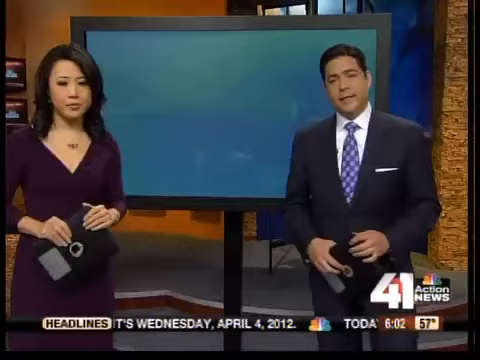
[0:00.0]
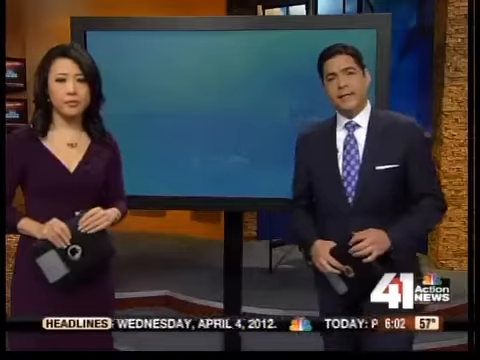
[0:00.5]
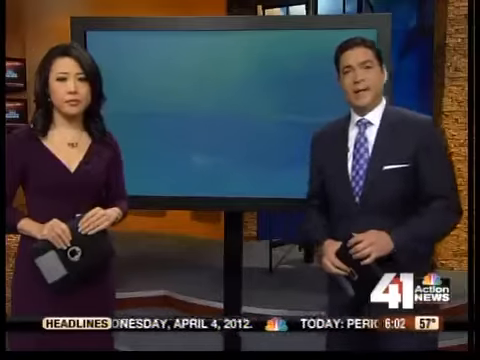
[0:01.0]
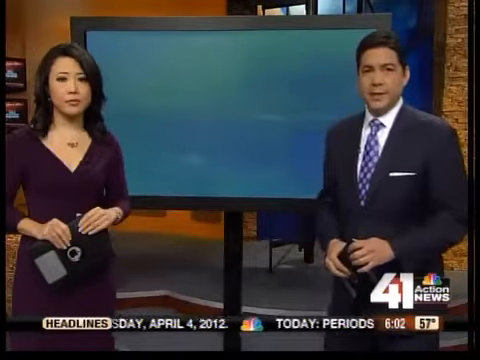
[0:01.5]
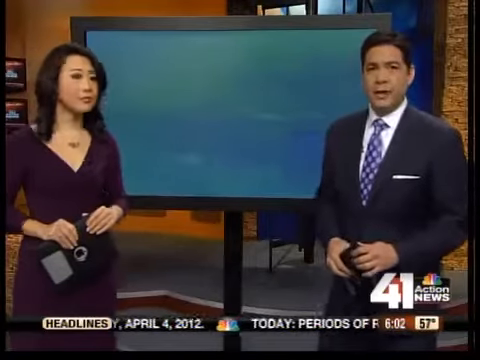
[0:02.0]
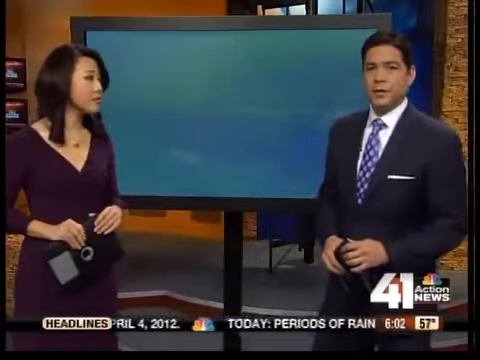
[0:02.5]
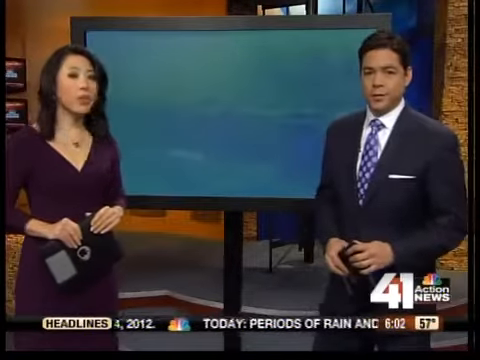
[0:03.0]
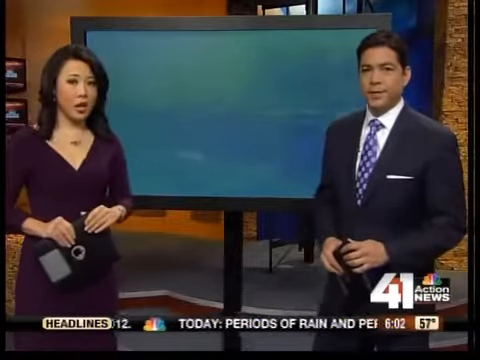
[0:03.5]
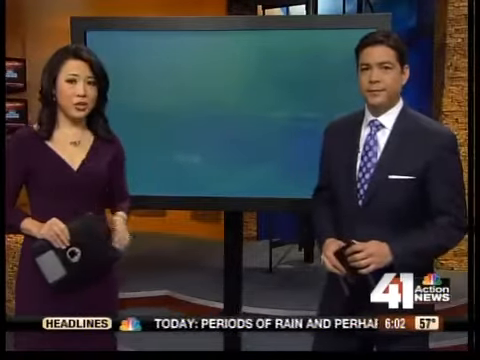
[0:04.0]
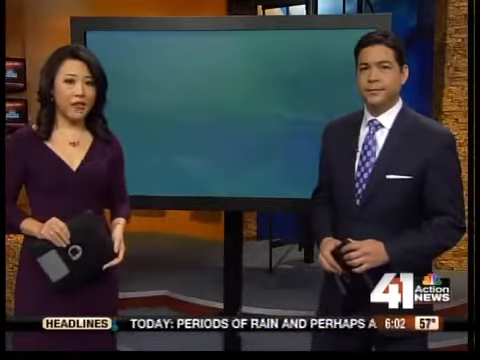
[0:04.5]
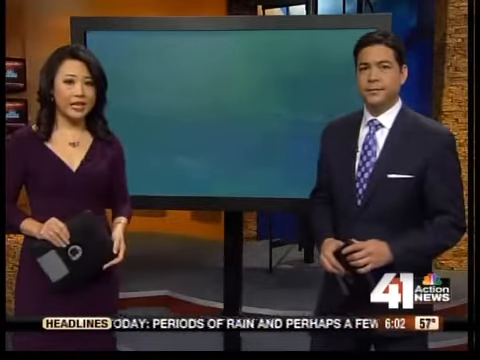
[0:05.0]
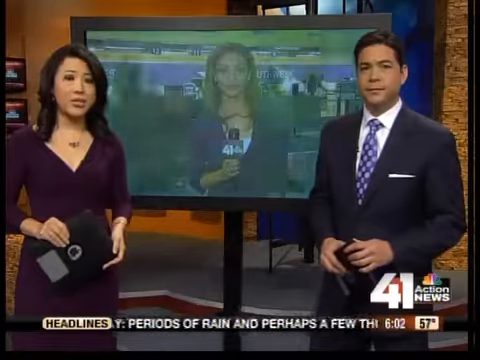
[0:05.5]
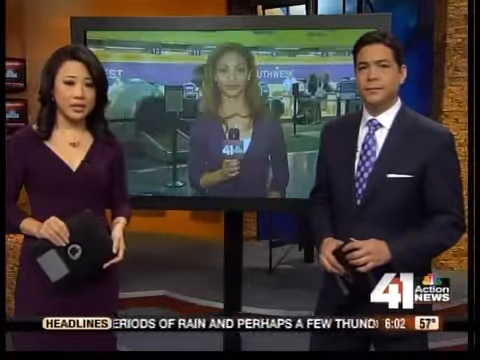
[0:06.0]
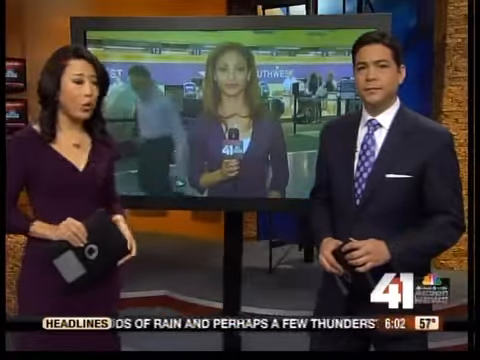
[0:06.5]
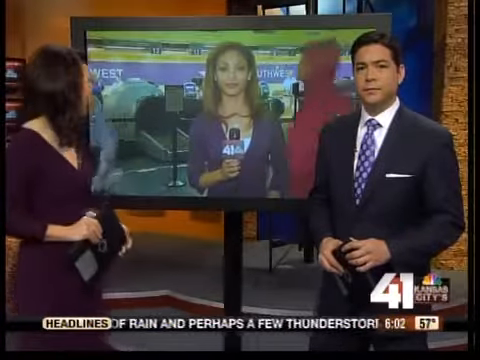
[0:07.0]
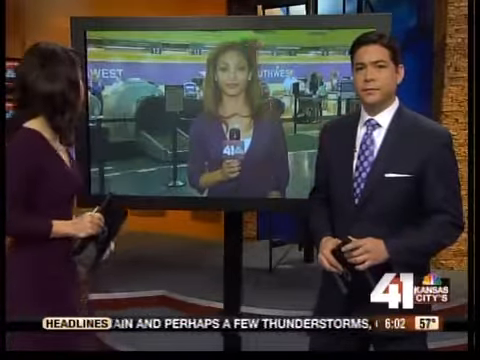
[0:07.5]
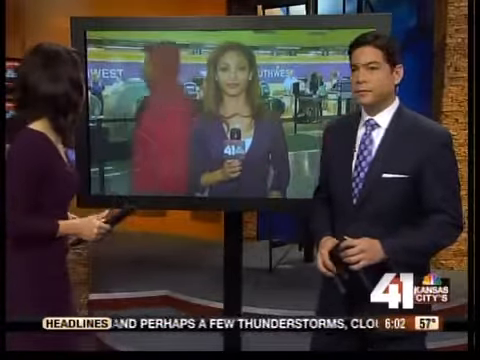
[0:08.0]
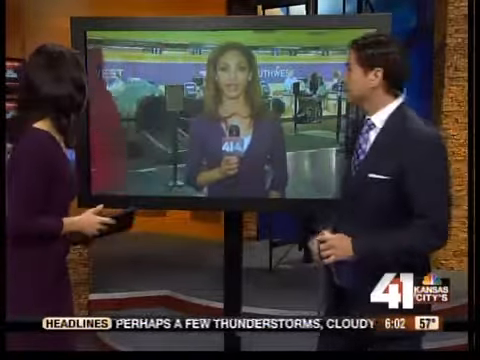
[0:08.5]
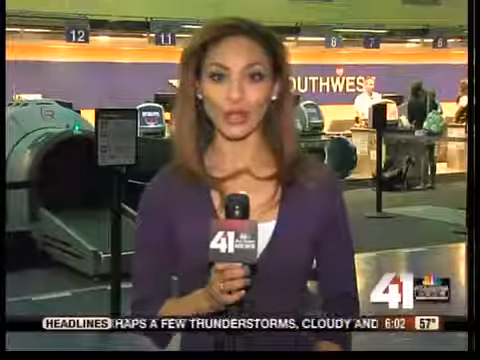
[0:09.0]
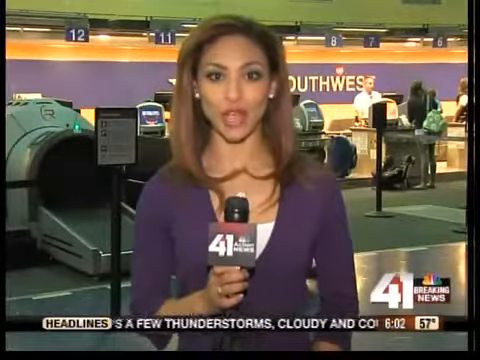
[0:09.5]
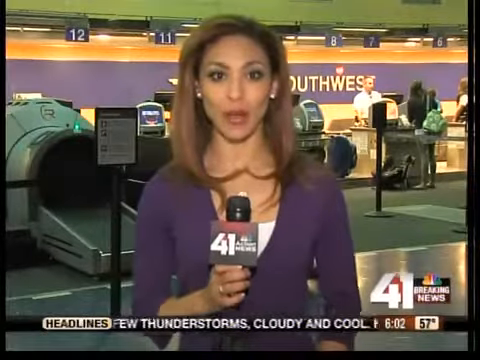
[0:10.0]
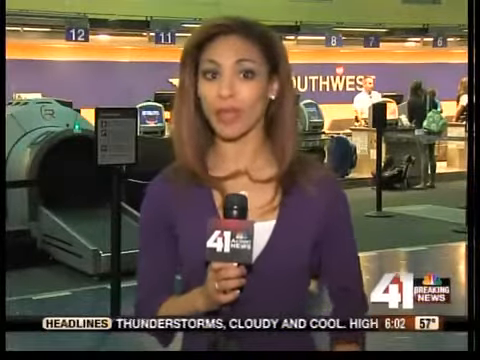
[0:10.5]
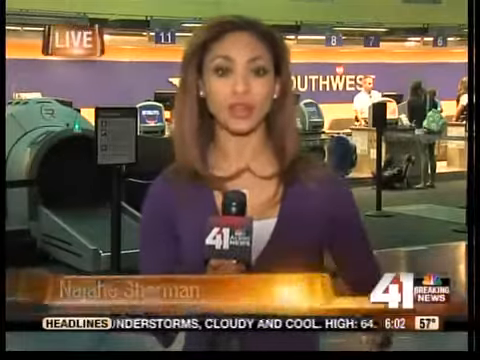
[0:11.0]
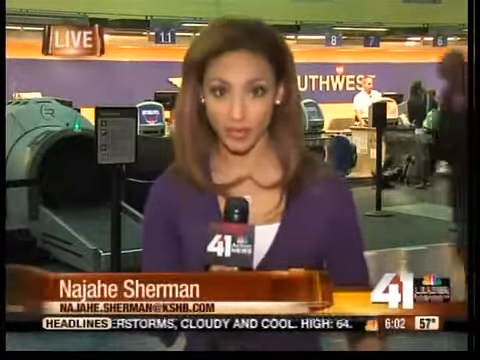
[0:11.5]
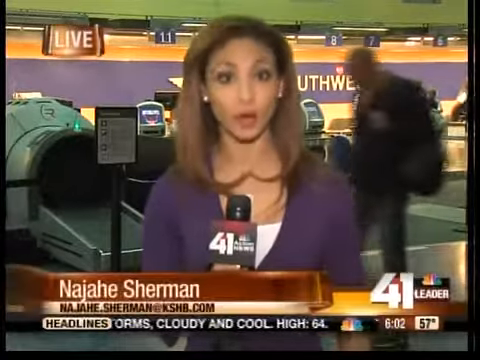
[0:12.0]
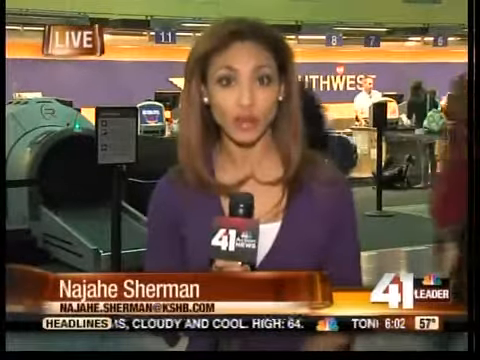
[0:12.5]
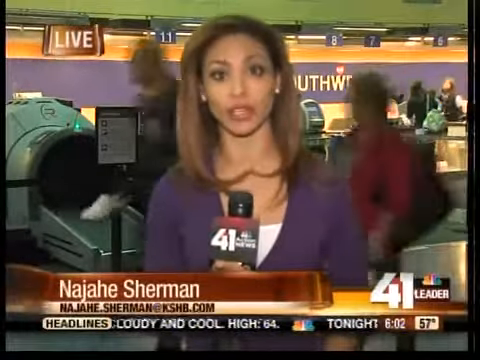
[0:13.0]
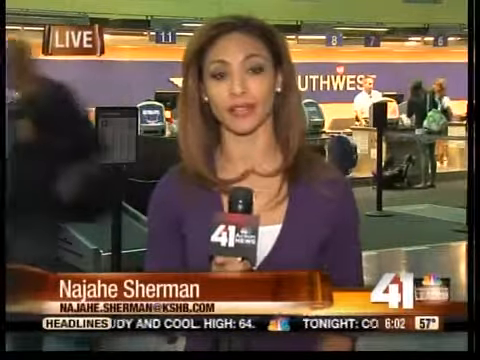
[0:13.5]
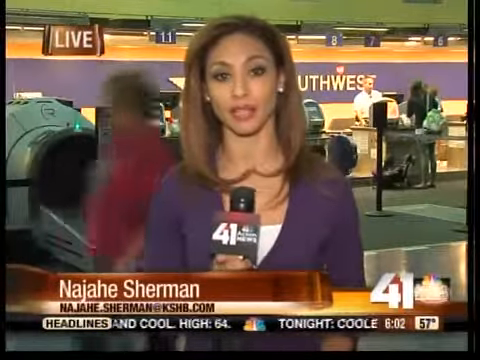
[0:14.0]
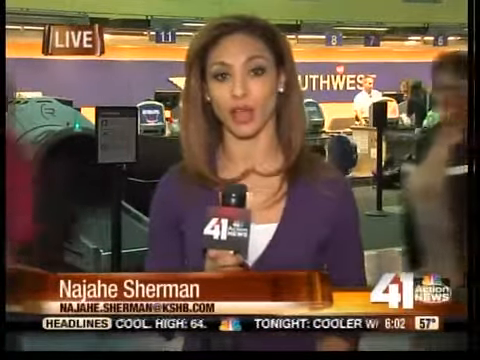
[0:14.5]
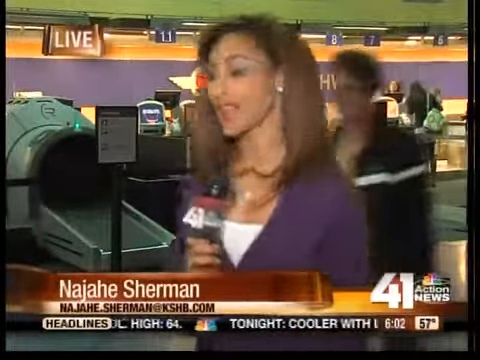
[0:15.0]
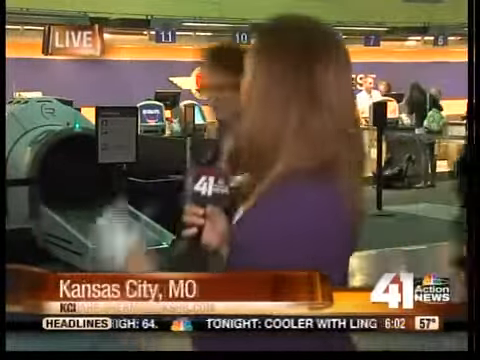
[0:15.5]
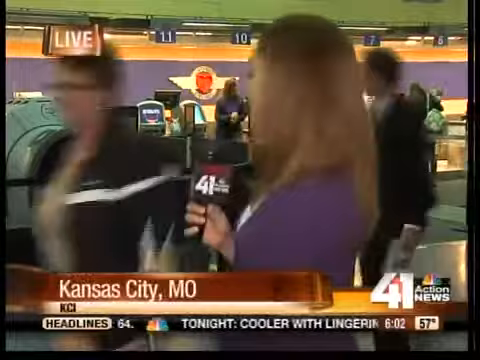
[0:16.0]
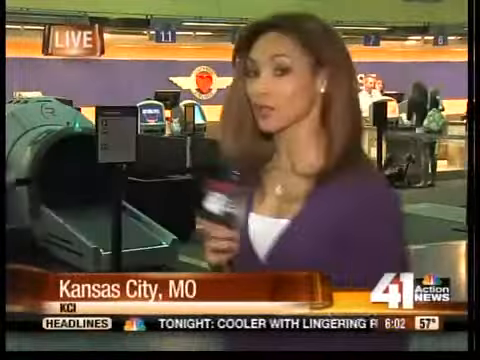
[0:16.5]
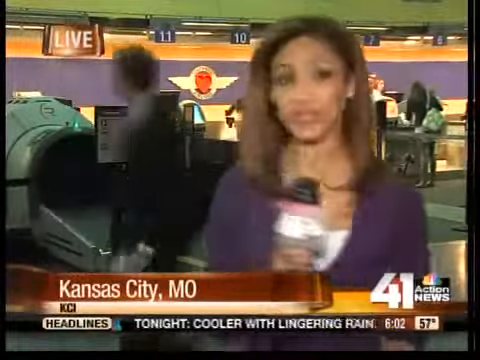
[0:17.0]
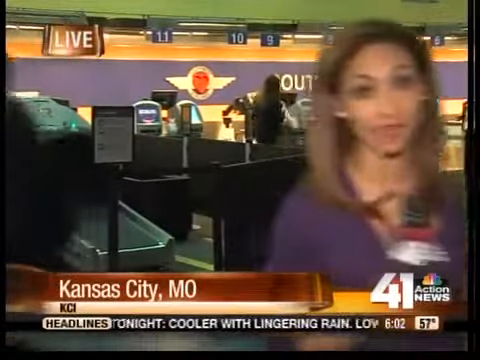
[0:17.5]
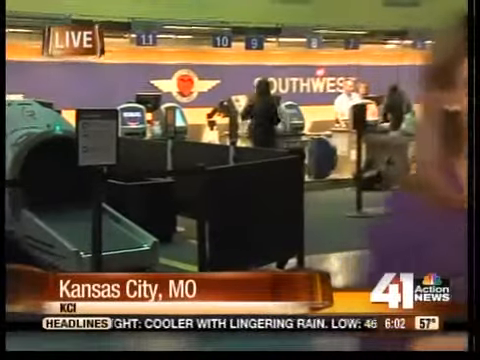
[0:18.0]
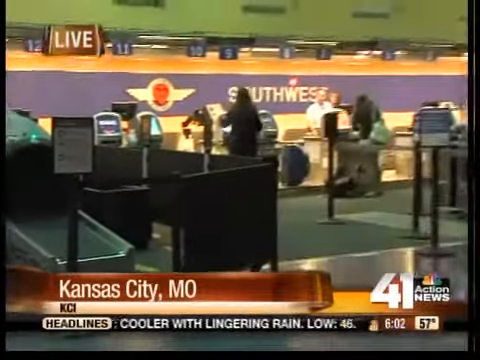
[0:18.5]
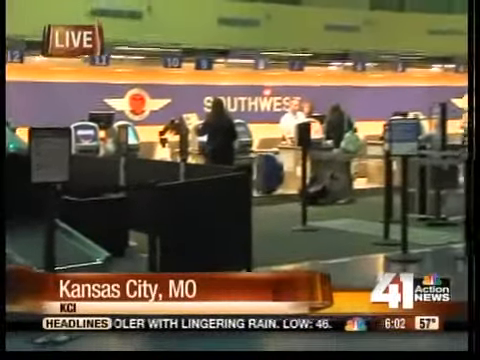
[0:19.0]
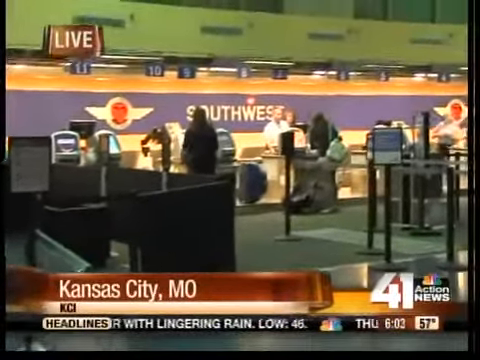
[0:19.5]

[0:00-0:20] On the left is a woman who looks Asian, with a fair complexion and straight, shoulder-length hair that curls up where it reaches her shoulders. She wears a necklace and a purple dress, and holds a silver iPad with a grey cover on her right arm. On the opposite end is a male presenter with black hair, wearing a black blazer, a blue tie and a white shirt. He also holds an iPad, in his left hand. Behind him is a blue screen. The broadcast is on 41 Action News. On the screen behind them appears a female presenter holding a microphone marked "41 Action News". She wears a purple top with a white vest underneath and has light brown, shoulder-length hair in a side part.